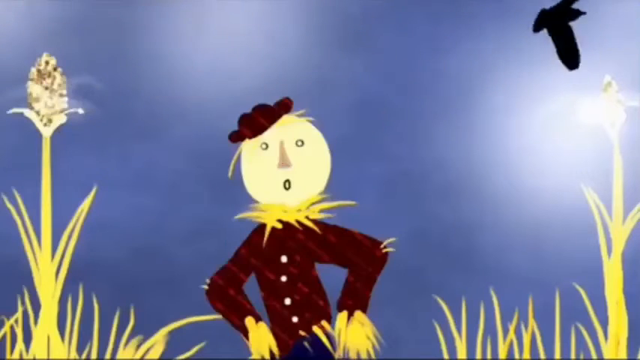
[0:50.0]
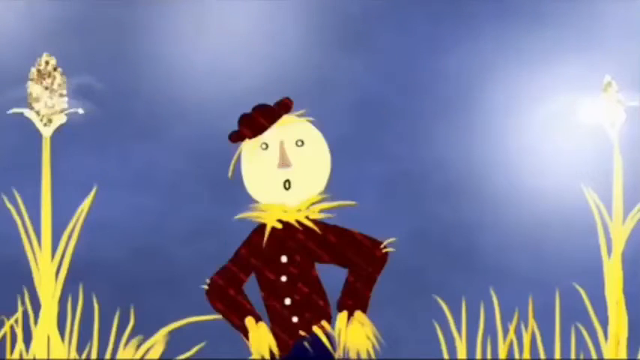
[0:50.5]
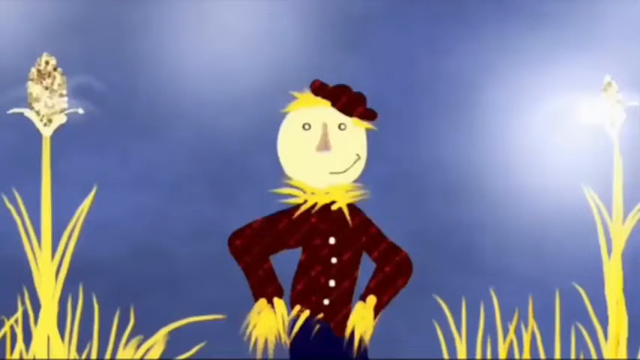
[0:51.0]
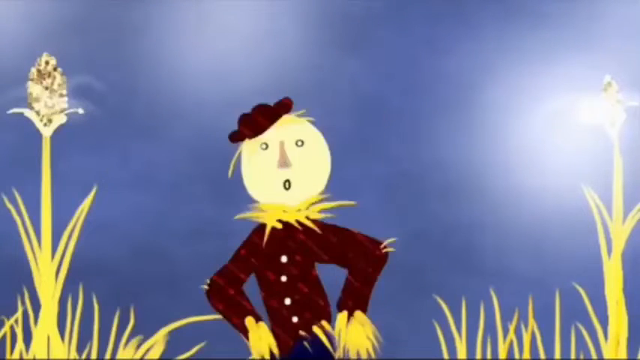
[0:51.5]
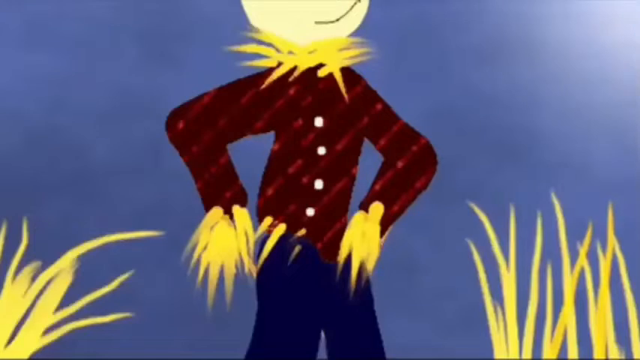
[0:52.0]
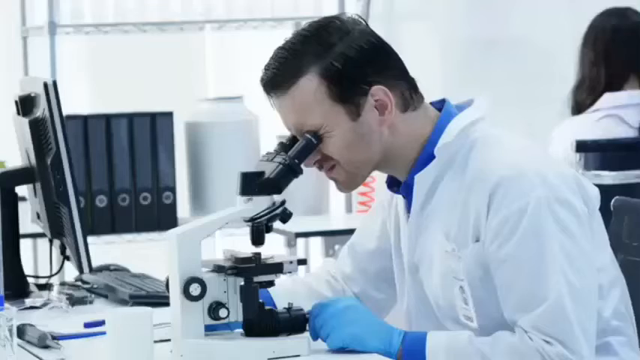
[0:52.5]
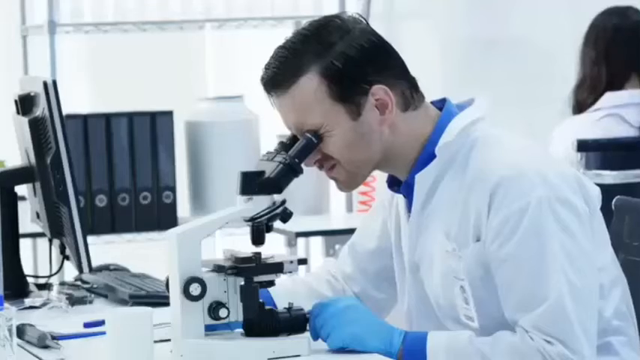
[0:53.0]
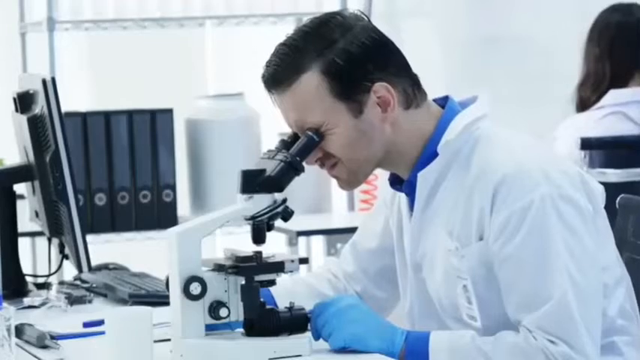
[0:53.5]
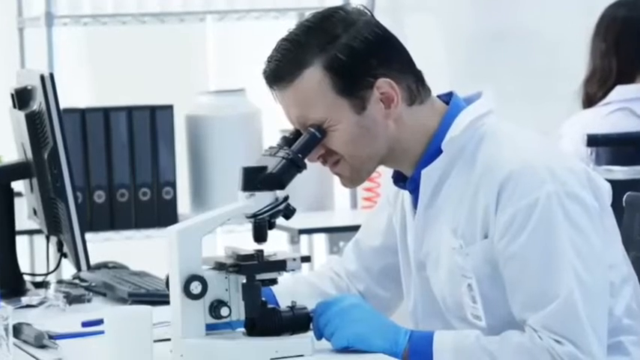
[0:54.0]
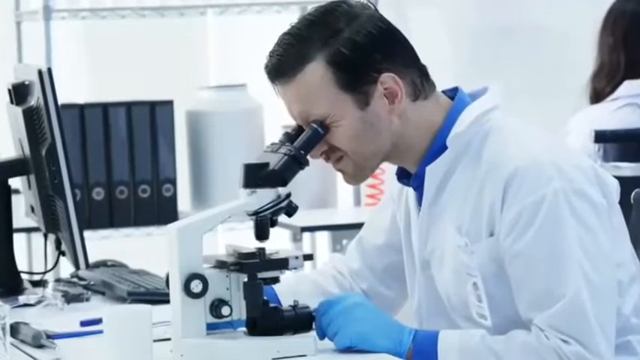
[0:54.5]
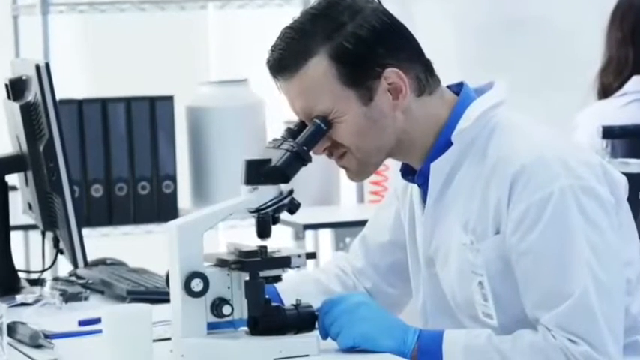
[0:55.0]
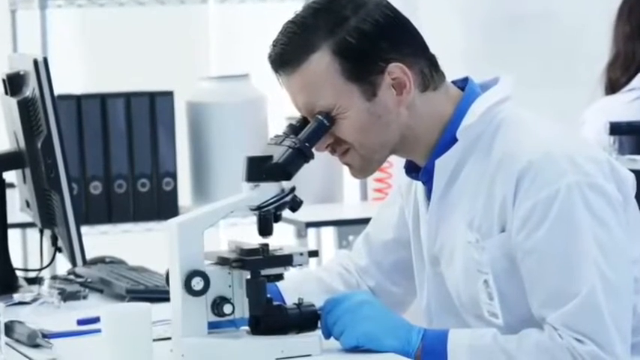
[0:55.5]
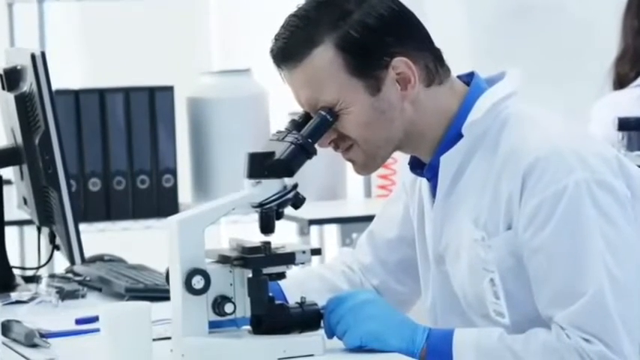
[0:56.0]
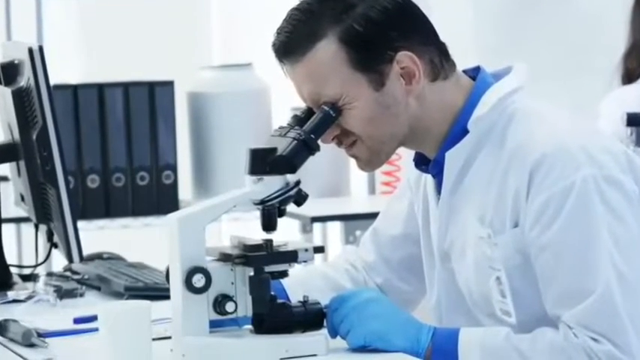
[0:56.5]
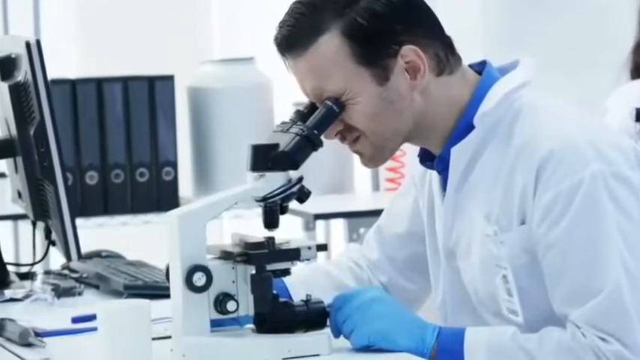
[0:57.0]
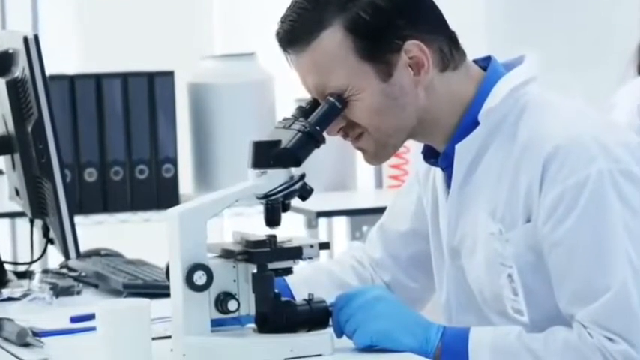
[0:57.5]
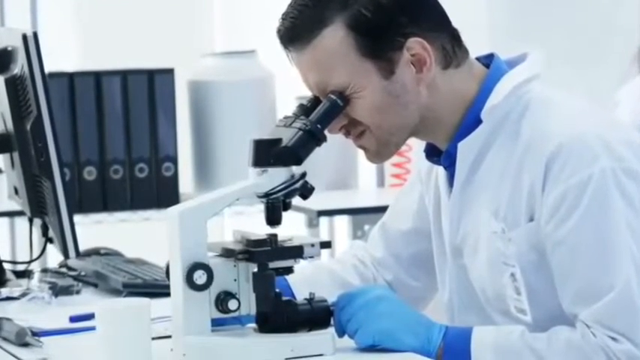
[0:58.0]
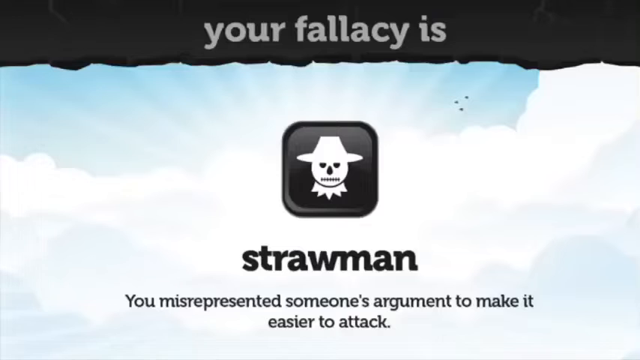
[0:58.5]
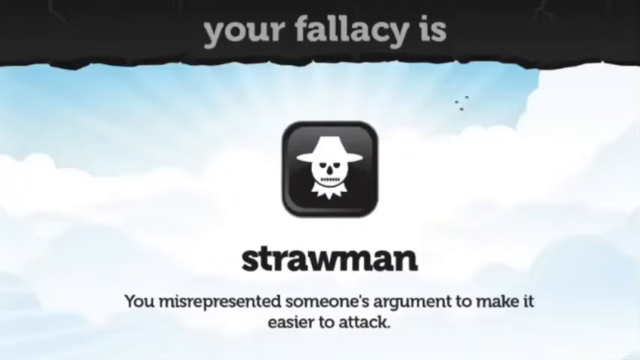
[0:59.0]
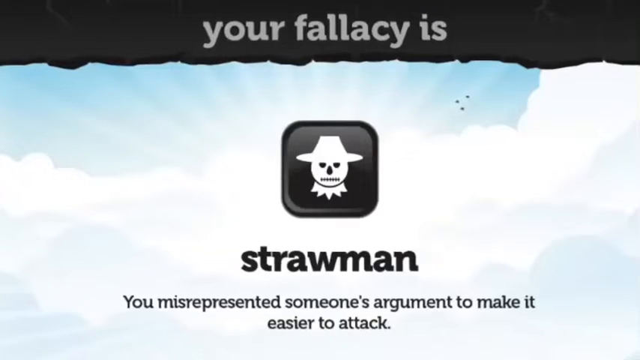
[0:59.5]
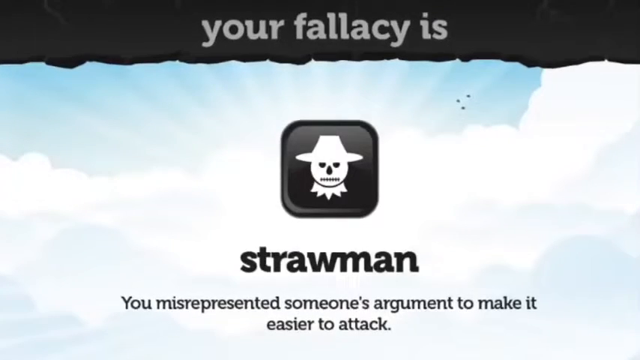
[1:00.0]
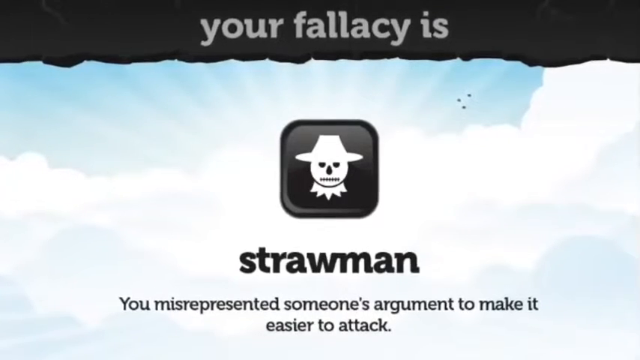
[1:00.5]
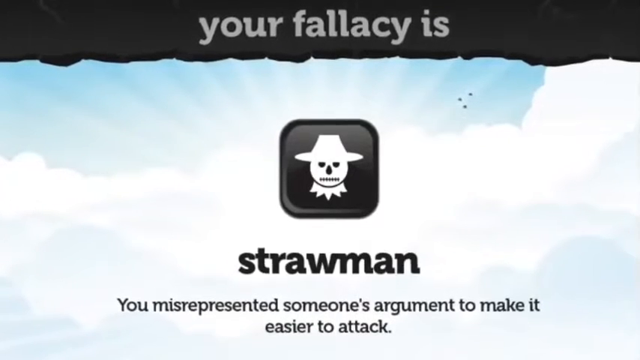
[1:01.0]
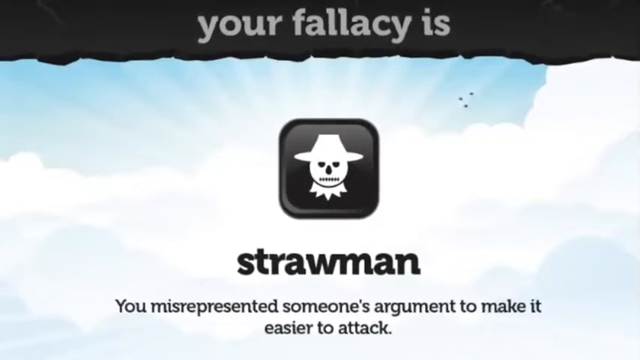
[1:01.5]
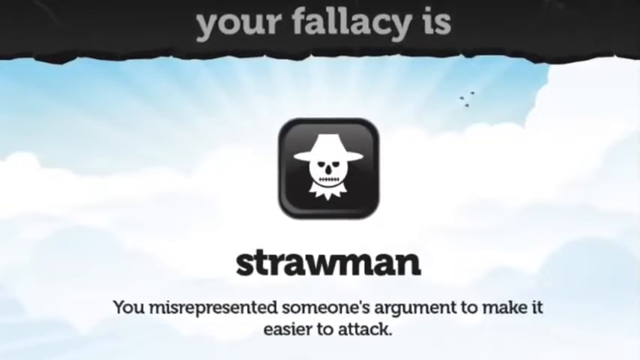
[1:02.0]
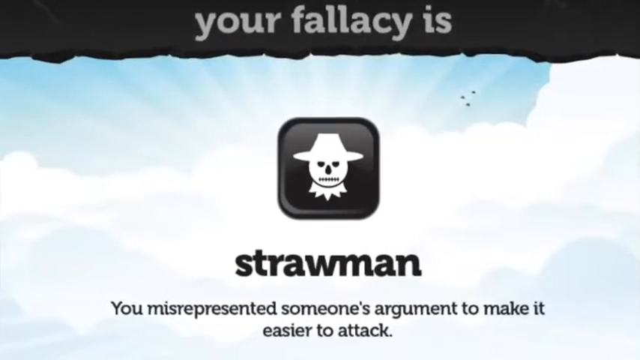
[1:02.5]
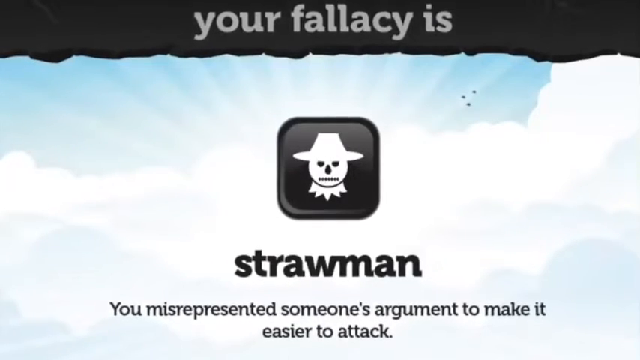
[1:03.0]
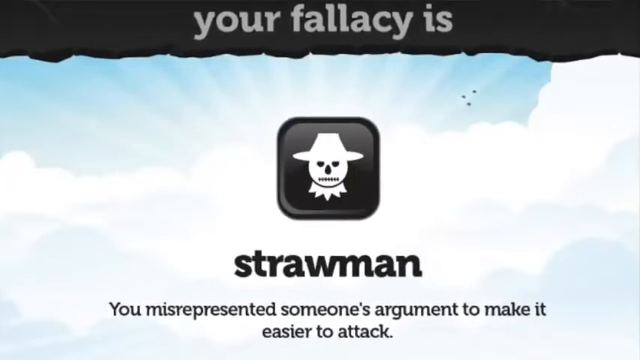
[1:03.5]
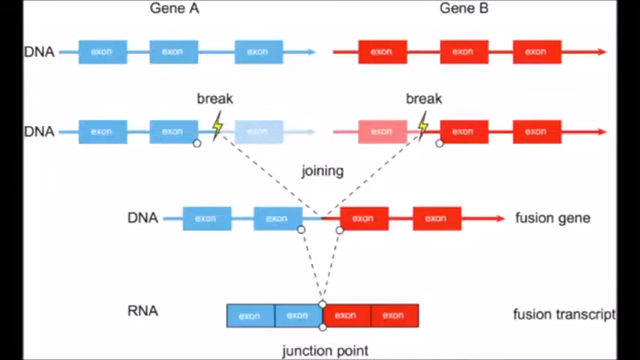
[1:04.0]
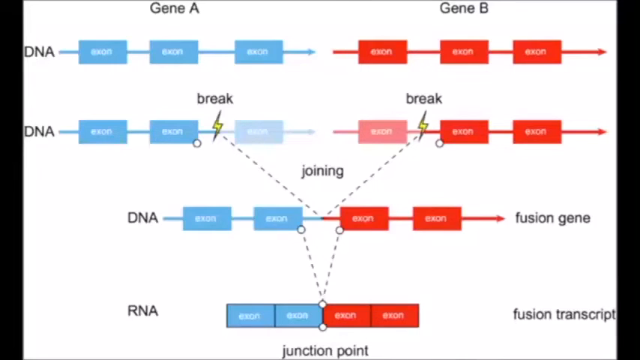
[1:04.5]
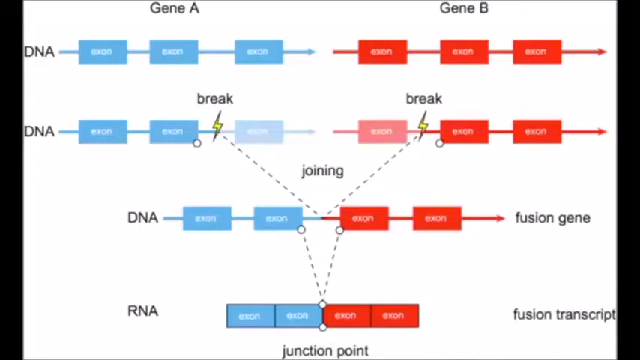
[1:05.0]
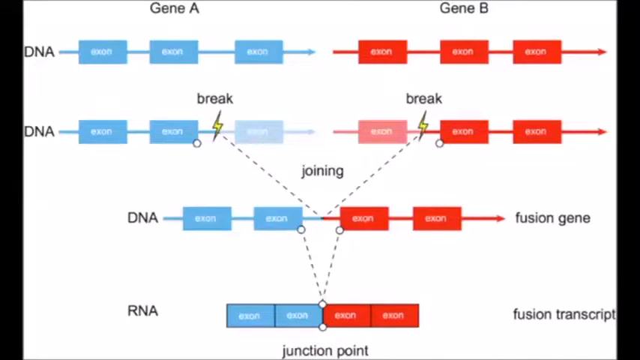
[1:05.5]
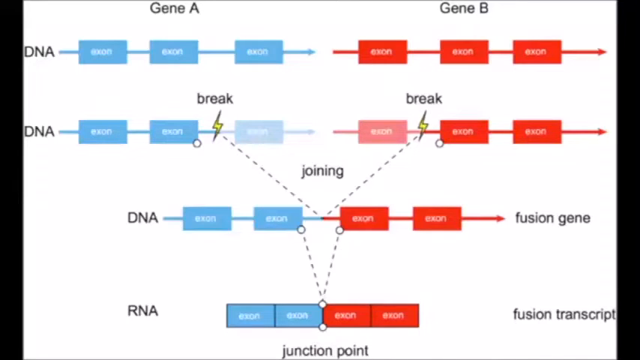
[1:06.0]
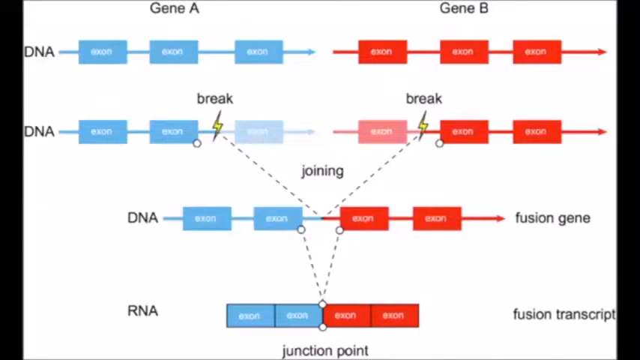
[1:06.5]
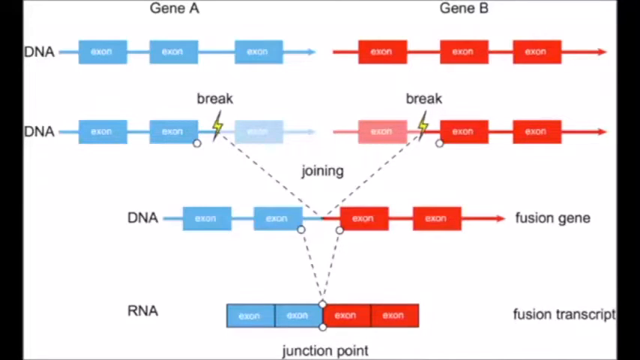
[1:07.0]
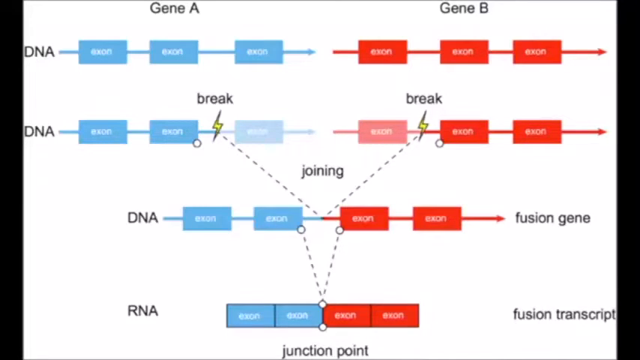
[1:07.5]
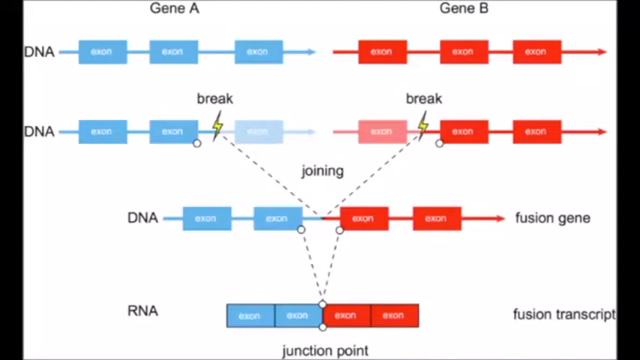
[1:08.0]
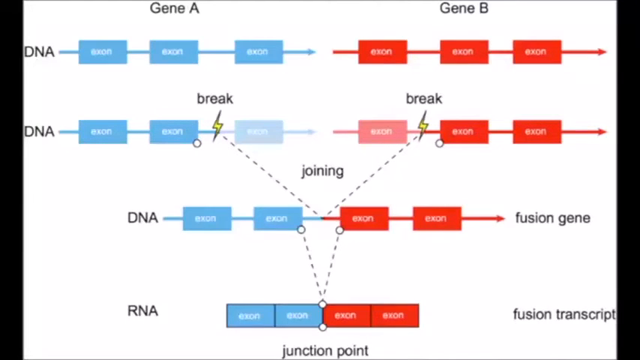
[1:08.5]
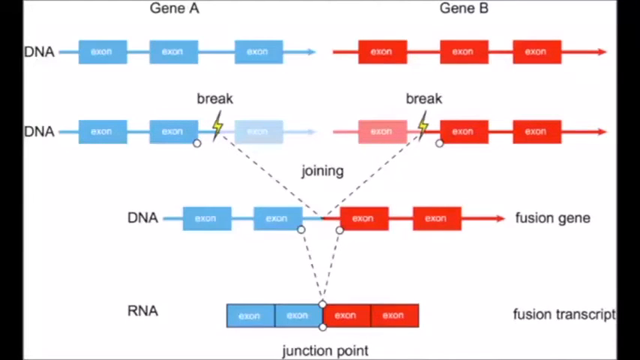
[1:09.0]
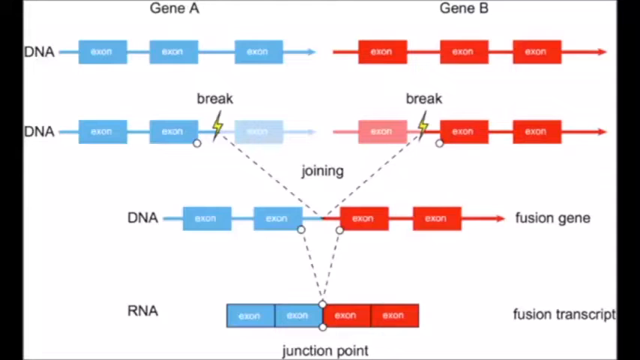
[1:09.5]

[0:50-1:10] The scarecrow is in the center of the screen as the birds go off screen in the upper right corner. The scarecrow smiles, and the view zooms in on its shirt before moving to a man sitting at a desk. He has short dark hair, a blue collared shirt with a white lab jacket over it, and a name tag clipped to his left pocket. His blue-gloved hands rest on the table on either side of a microscope. More to the right is a computer screen and keyboard, and further to the right or in the background is a metal shelf with five black binders and a large white container. Behind him, in the upper right corner of the screen, is another person in a white jacket with long dark hair. The man sits in a chair, kind of bent forward, pressing his eyes against the microscope, and the view zooms in toward the microscope. Next, a screen has a black banner with a jagged bottom at the top, with gray text inside reading "your fallacy is." There is a blue sky with clouds and sunbeams, and in front of that a black square with curved corners containing a white rendition of a scarecrow's head. Beneath it in black it says "straw man," and below that "you misrepresented someone's argument to make it easier to attack." Then a screen with a white background shows gene A on the left and gene B on the right.